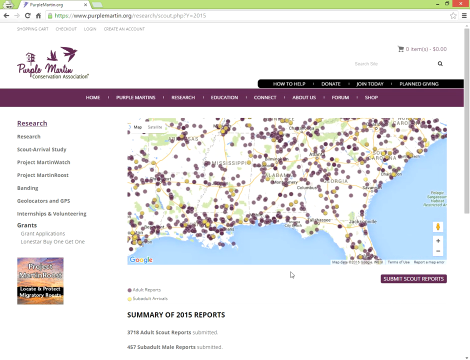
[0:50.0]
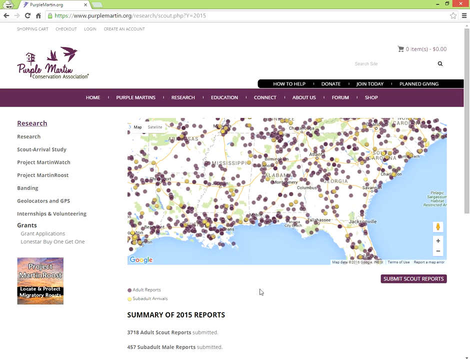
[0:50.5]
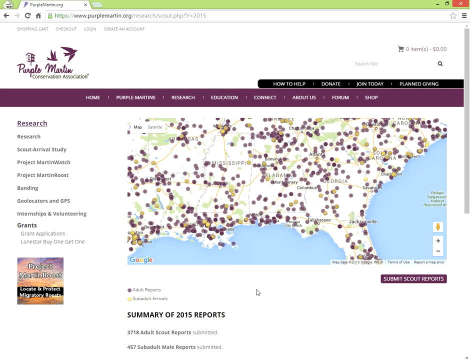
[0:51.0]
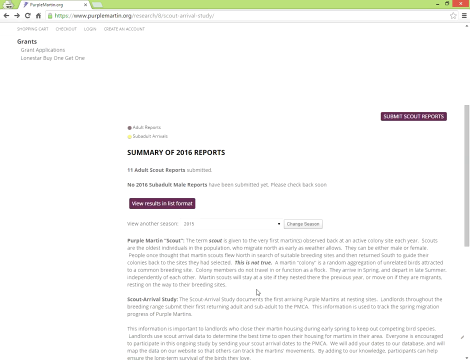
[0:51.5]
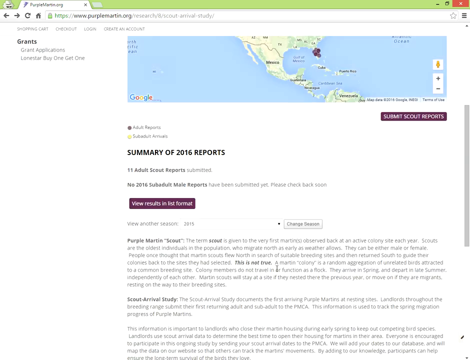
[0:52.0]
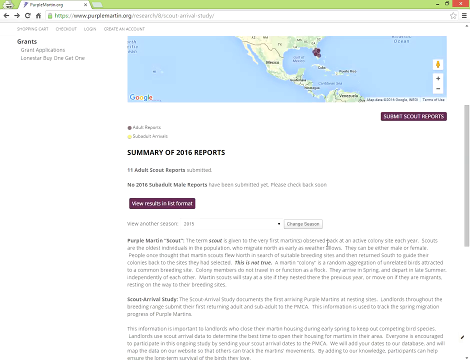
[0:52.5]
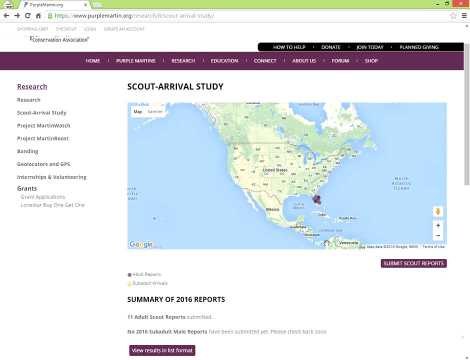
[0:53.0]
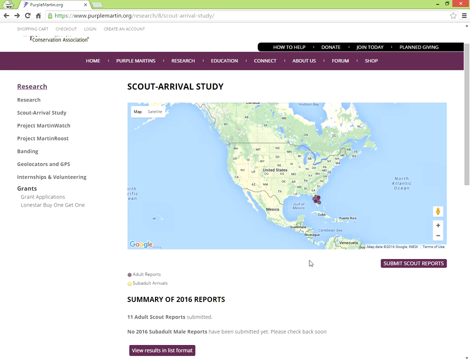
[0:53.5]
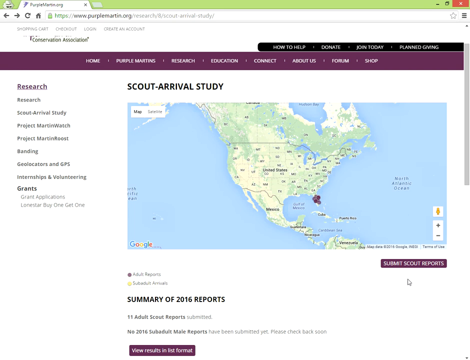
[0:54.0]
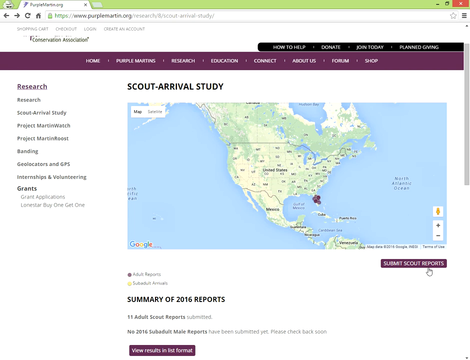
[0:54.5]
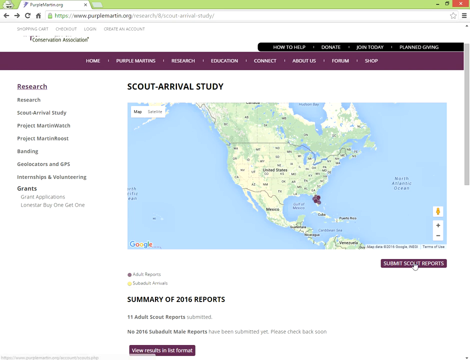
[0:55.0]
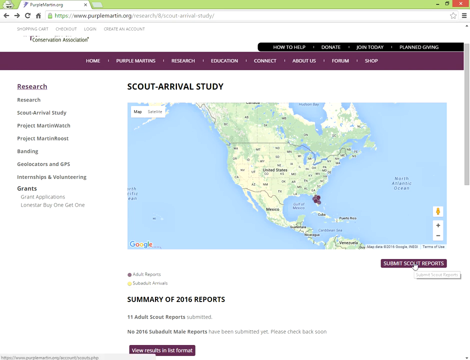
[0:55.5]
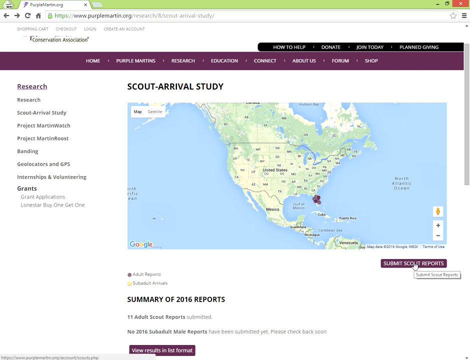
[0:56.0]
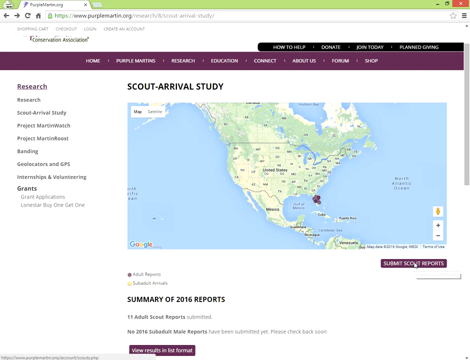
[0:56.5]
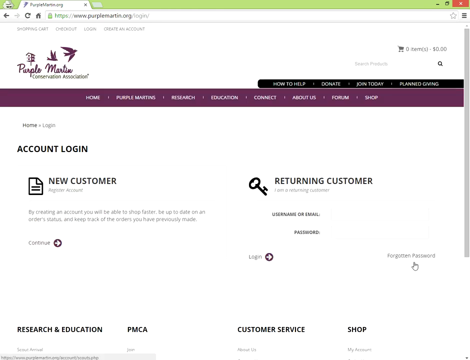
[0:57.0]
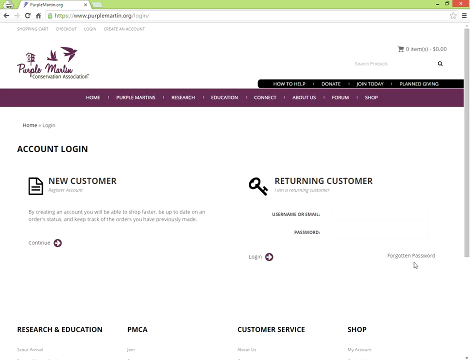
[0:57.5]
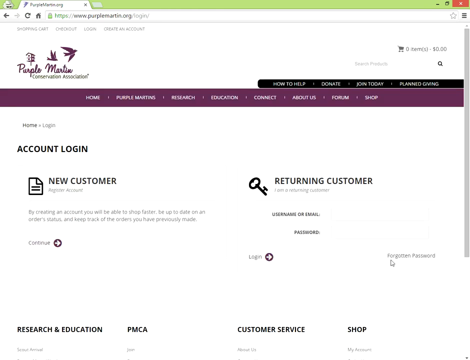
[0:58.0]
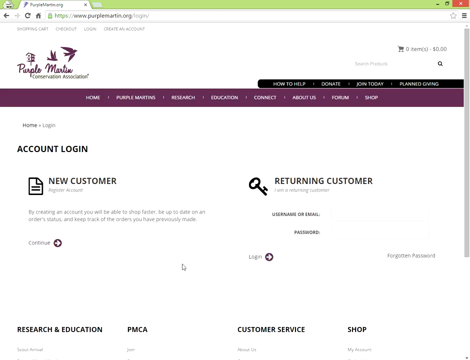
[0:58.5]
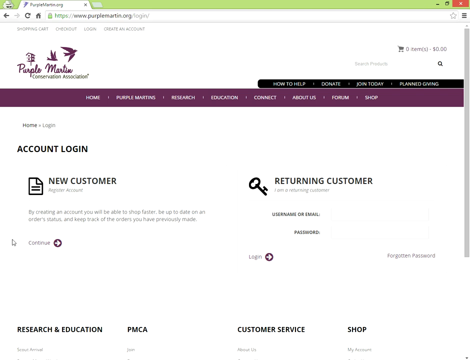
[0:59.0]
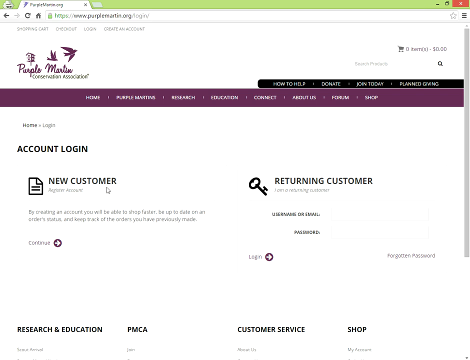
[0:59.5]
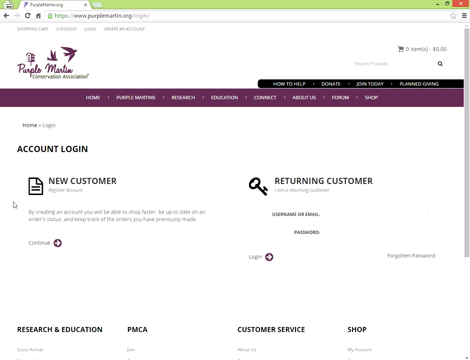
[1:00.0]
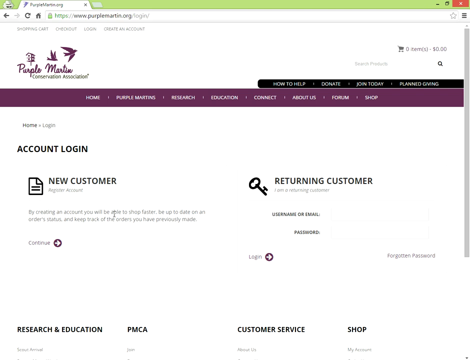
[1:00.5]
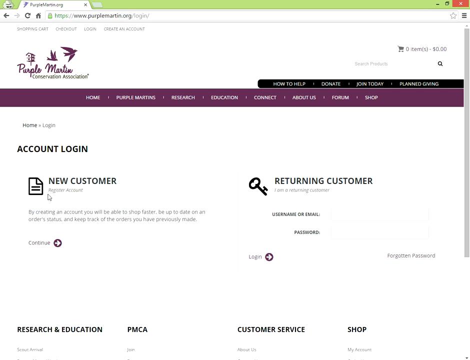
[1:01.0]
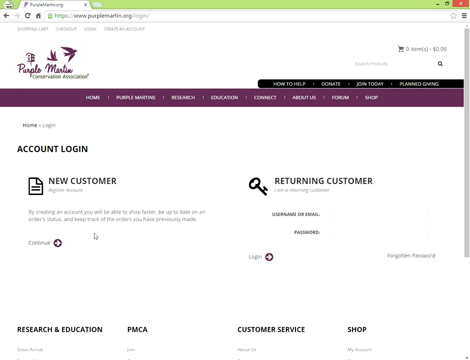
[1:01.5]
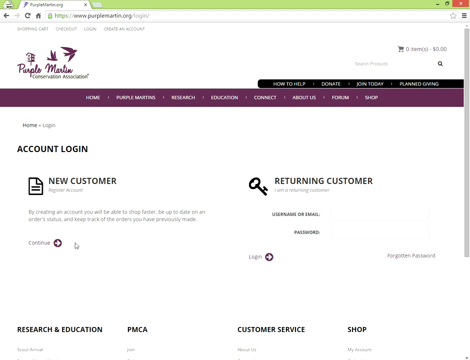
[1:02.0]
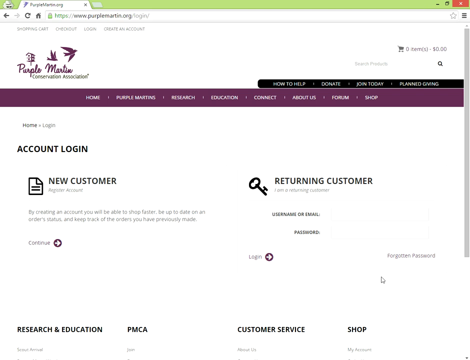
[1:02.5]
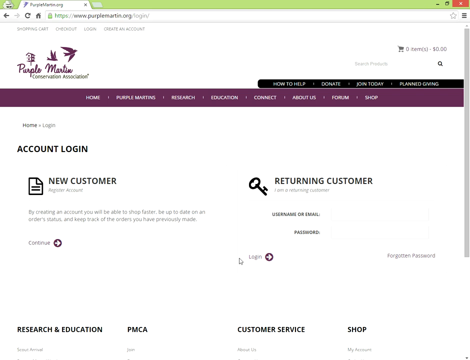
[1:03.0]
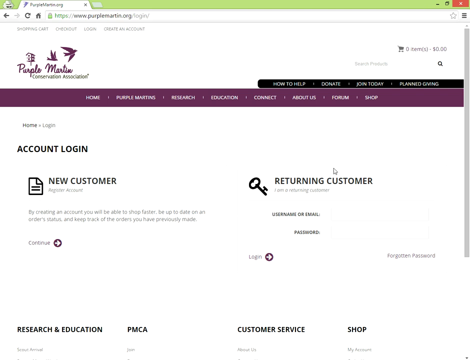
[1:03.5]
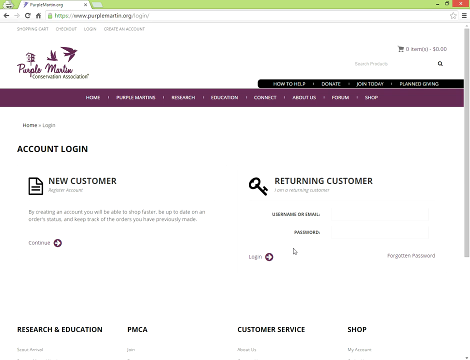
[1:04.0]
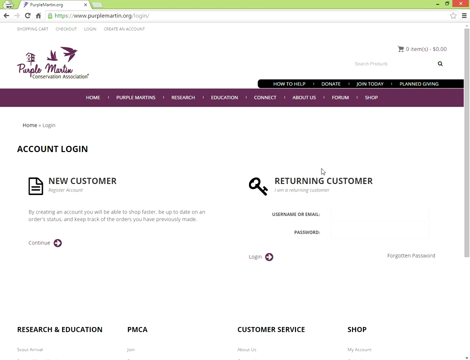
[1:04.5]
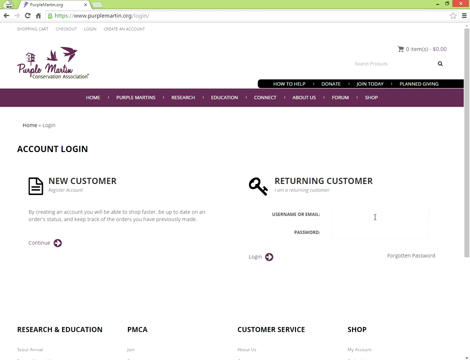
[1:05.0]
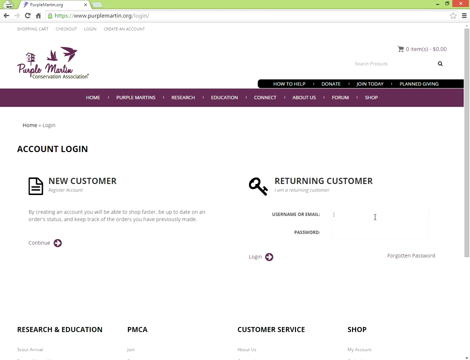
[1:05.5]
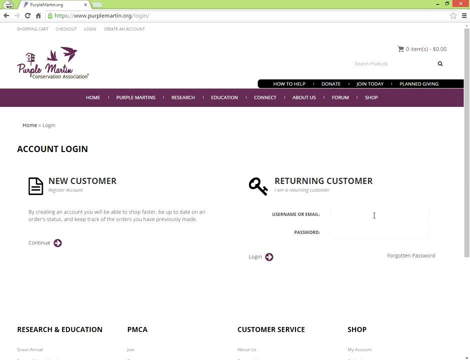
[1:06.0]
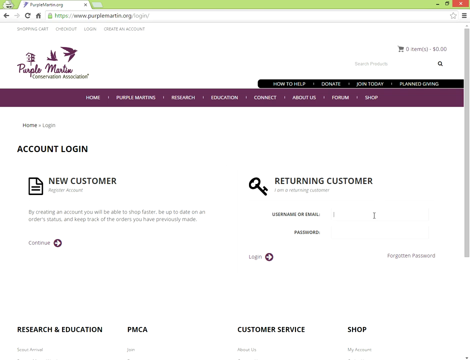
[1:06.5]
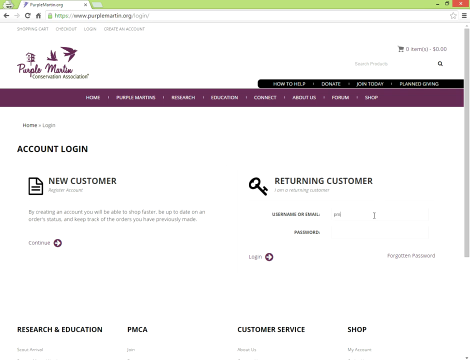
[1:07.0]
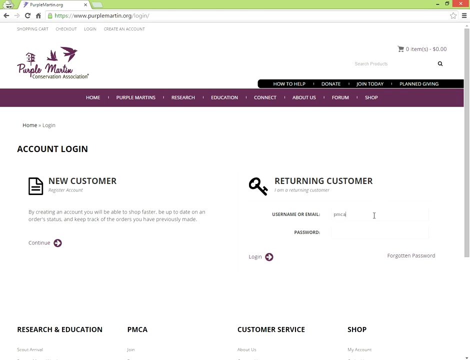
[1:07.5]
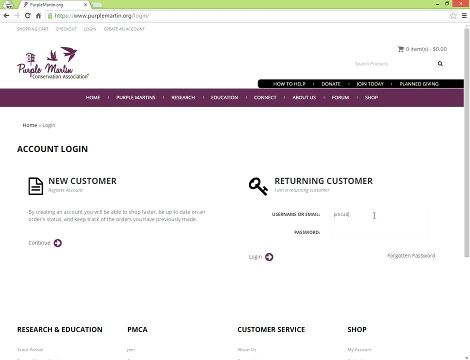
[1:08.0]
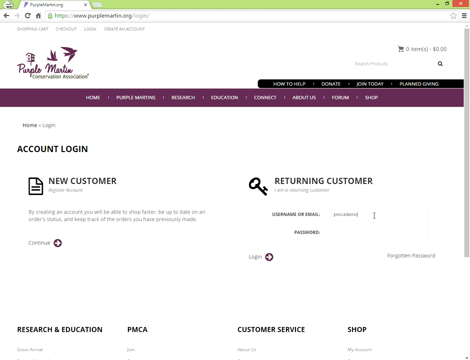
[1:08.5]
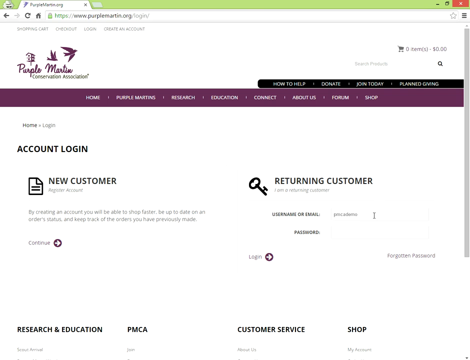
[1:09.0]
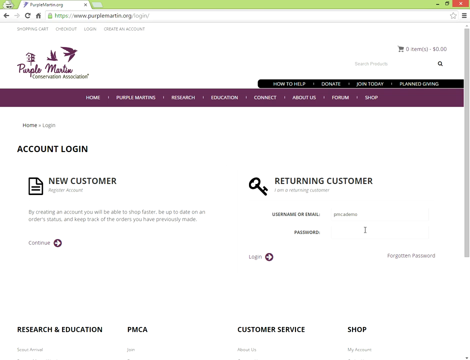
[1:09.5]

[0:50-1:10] On the research page of the Purple Martin website, a map in a horizontal rectangle shows mostly purple dots interspersed with a lot of yellow dots. Below the map on the right side is a purple button with white text that says "Submit scout reports". The user clicks it and is given a choice of new customer or returning customer, then enters their account and logs in. On the account login page, the words "account login" appear in black, all caps, sans serif. On the left side of the page it says "new customer" with a little page icon, and on the right side it says "returning customer" with a key icon. Below that are two fields, one for username or email and one for password.